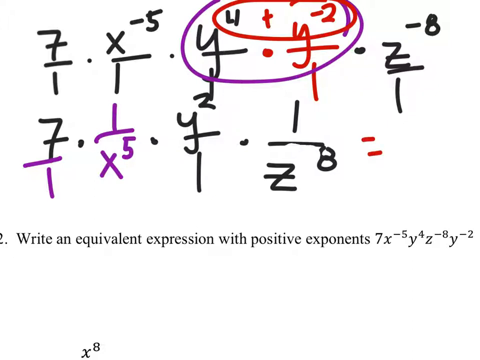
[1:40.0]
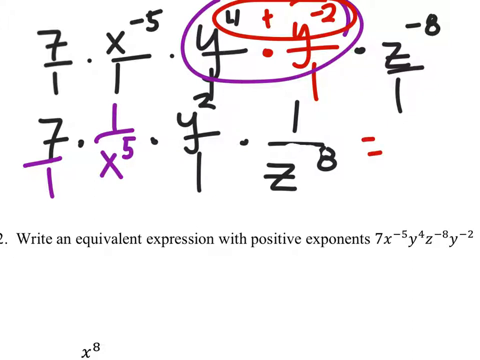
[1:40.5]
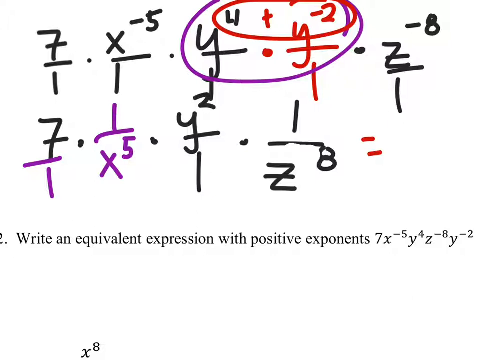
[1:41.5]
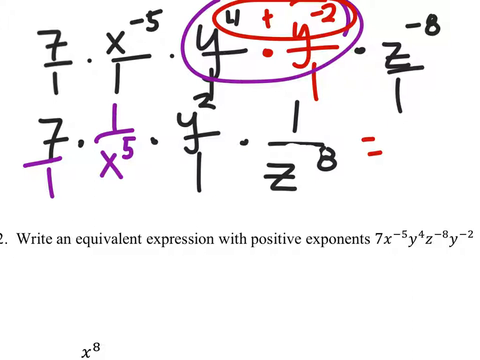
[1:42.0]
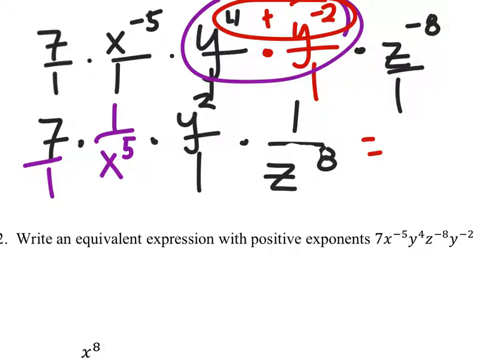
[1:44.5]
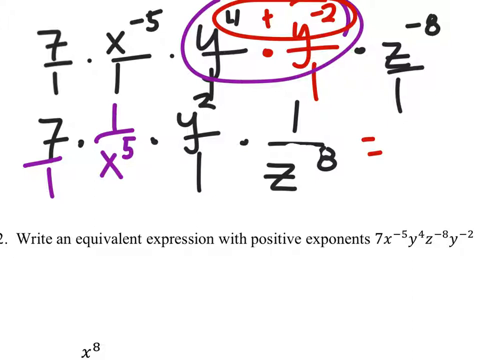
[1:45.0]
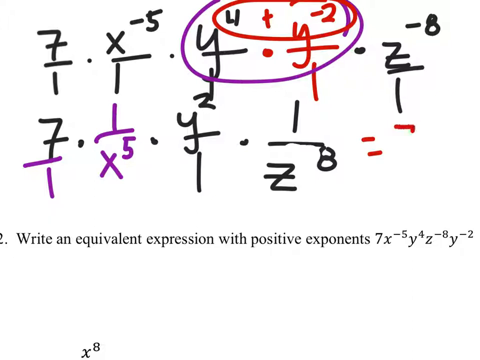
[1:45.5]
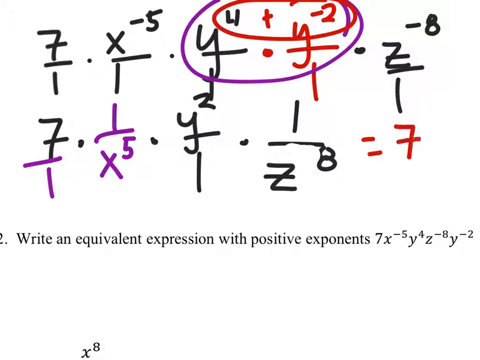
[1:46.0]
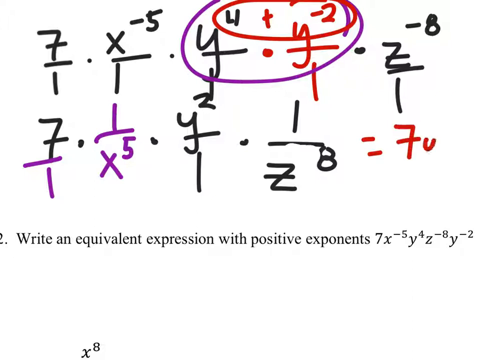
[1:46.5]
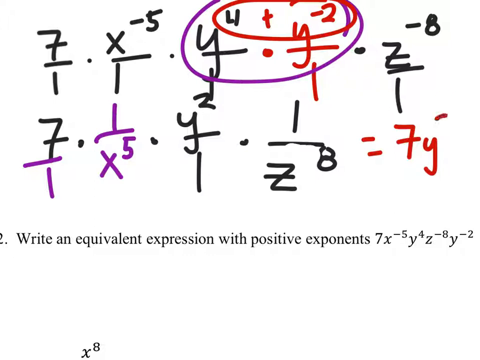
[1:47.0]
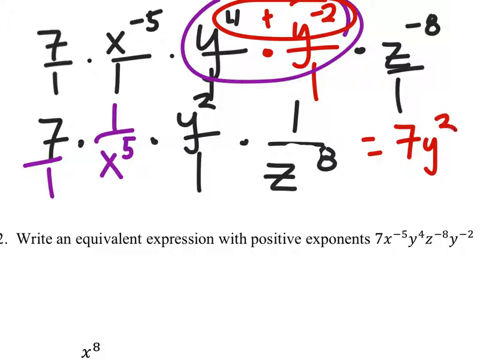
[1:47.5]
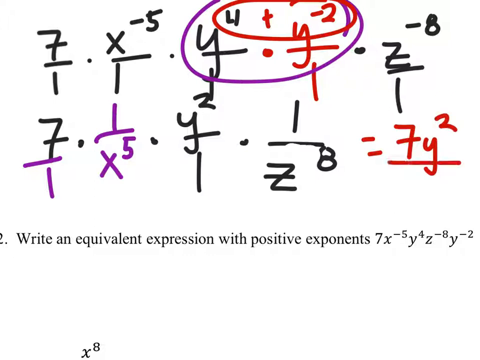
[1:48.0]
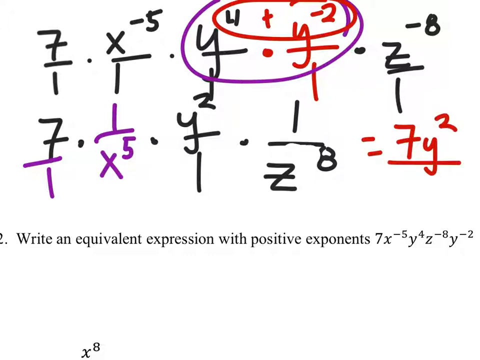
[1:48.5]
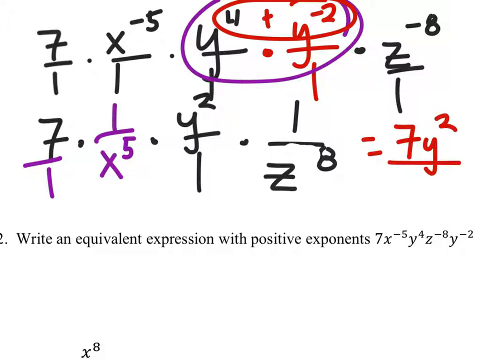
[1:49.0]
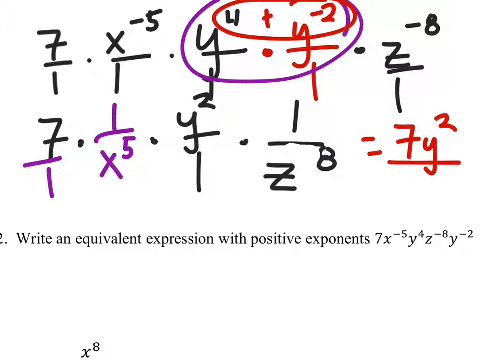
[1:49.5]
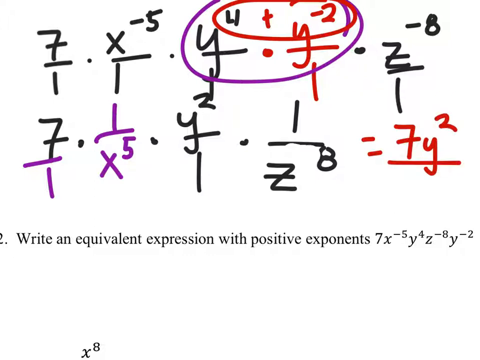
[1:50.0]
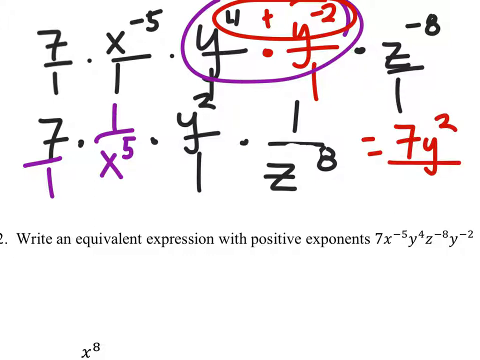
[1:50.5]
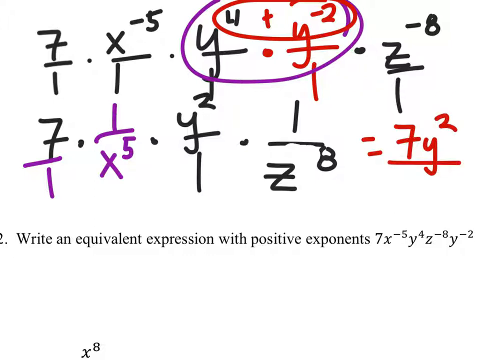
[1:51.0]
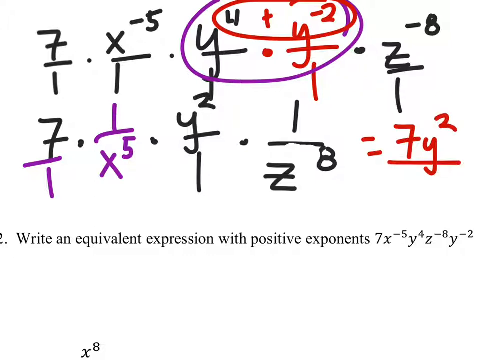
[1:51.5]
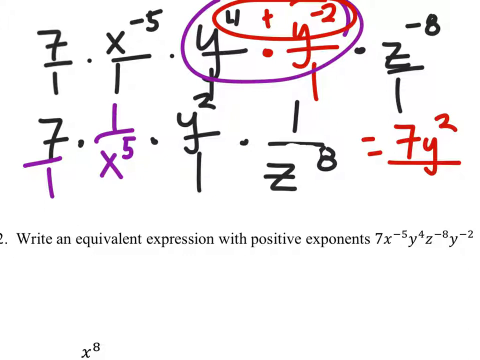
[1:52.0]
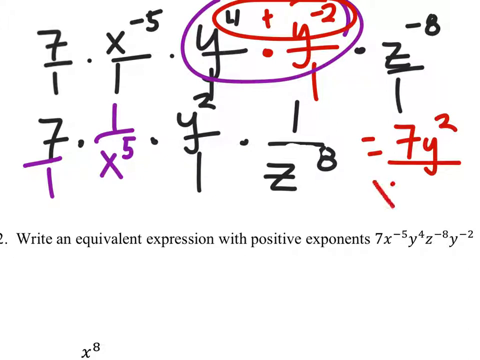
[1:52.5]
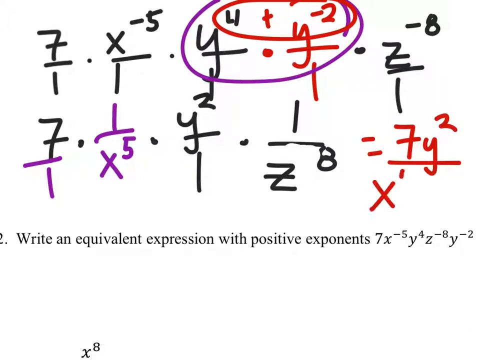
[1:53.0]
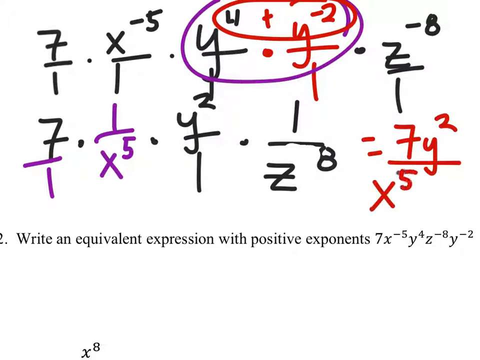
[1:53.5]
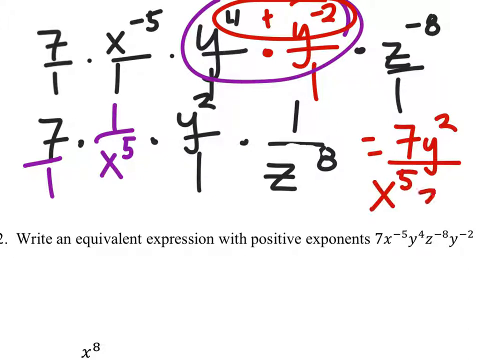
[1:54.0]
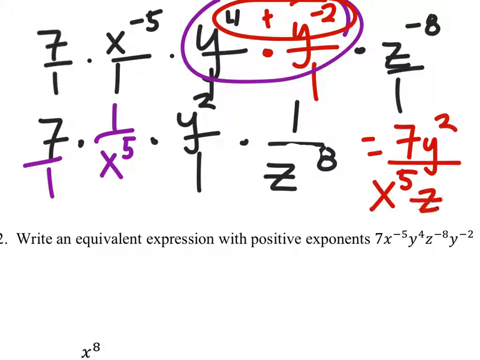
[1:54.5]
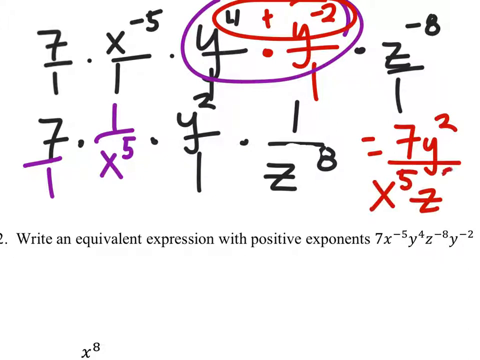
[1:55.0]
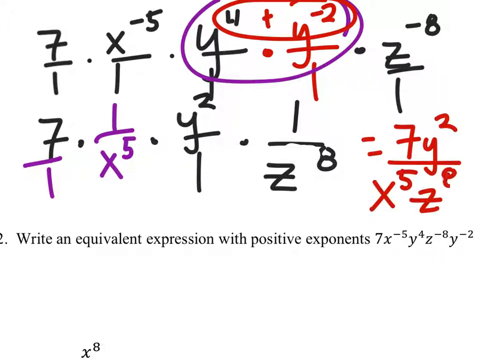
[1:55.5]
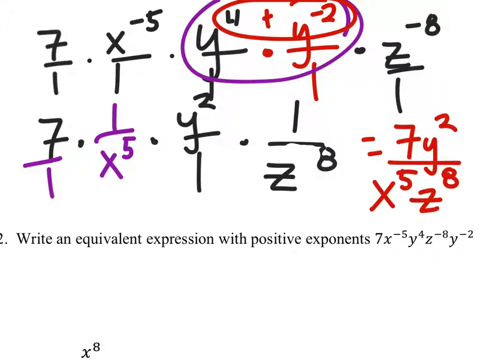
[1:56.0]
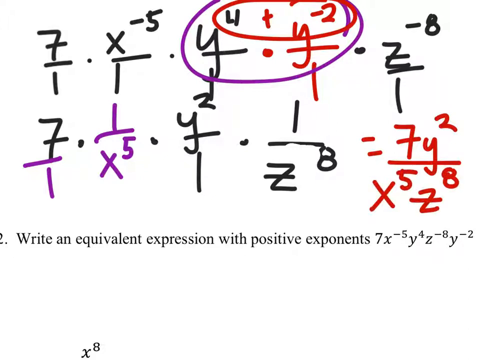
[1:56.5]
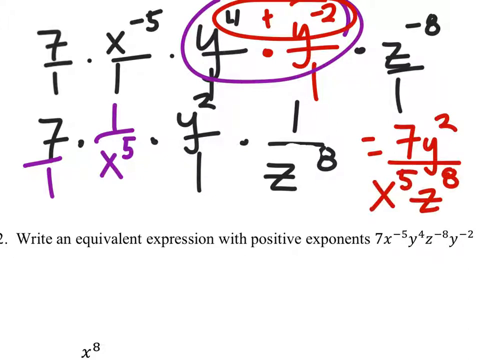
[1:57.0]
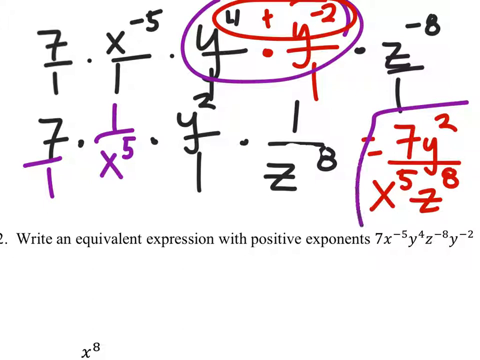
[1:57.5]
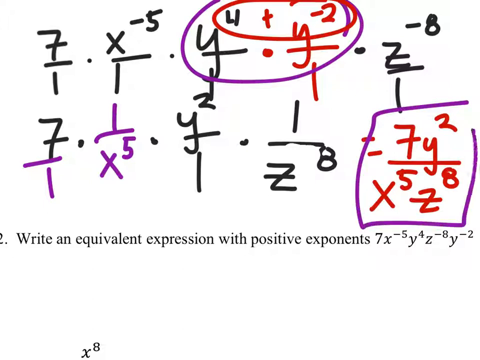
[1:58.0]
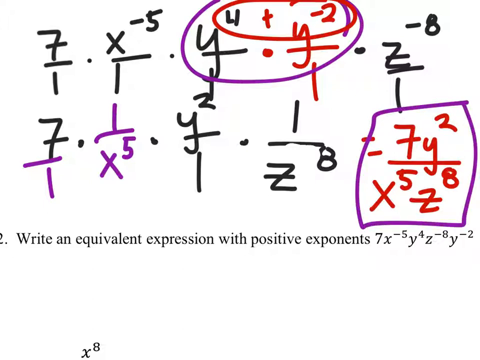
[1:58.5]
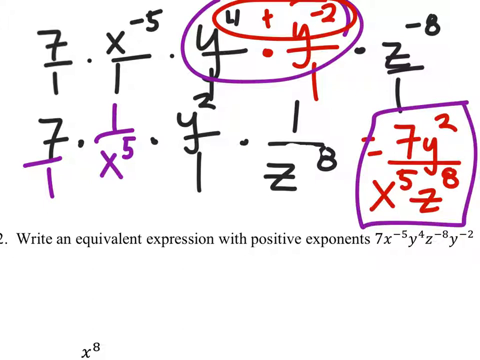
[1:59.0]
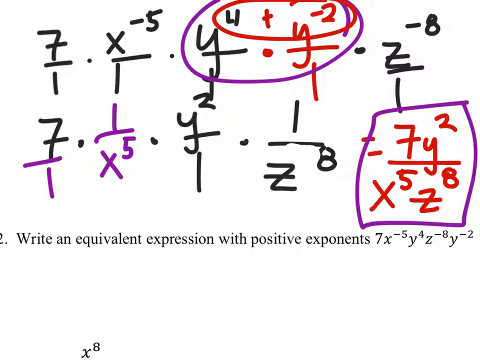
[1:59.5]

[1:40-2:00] The white screen with the gradient to black in roughly the bottom 20% remains. Handwritten across the top is 7 over 1 times x to the negative 5th over 1 times y to the 4th over 1, in red times y to the negative 2 over 1, and back in black, z to the negative 8 over 1. A purple circle surrounds the y's and their exponents, and a red circle surrounds just the exponents, cutting into the red y to take in its top half, with a red plus sign indicating the exponents are added. Beneath that, the rewritten equation reads: a black 7, a purple "over 1," in purple times 1 over x to the 5th, then in black, times y to the 2nd over 1, times 1 over z to the 8th. The minus sign that was on the 8 has been rubbed out, cutting slightly into the division bar. A red equals sign follows. Beneath that is the 2, partially off-frame, and the typed text "write an equivalent expression with positive exponents" with 7x to the negative 5th, y to the 4th, z to the negative 8, and y to the negative 2. The screen holds briefly, then 7y to the 2nd over x to the fifth z to the eighth is written in red next to the equals sign. A purple box is drawn around it, starting in the upper right and moving around, marking it as the equivalent expression that answers the question.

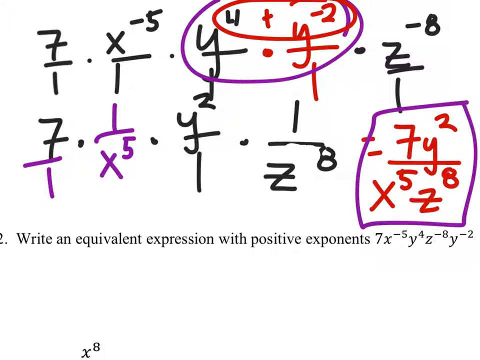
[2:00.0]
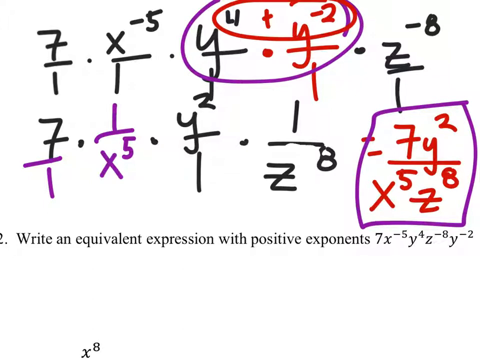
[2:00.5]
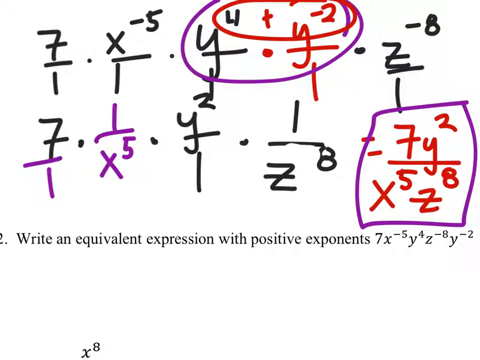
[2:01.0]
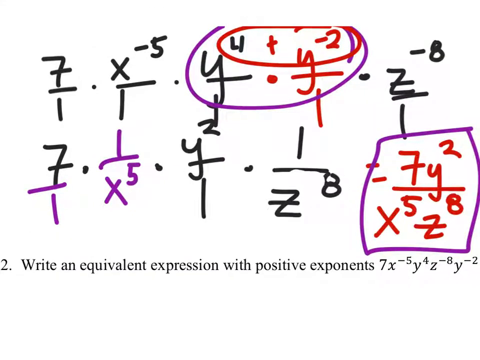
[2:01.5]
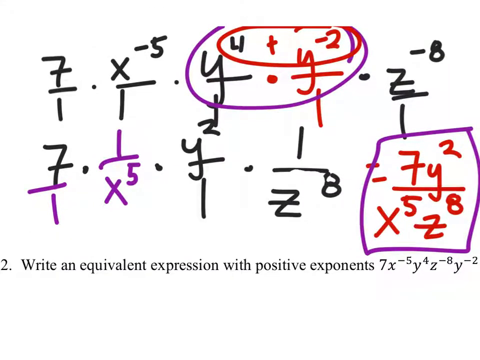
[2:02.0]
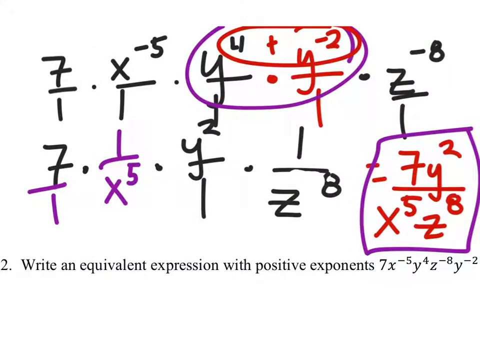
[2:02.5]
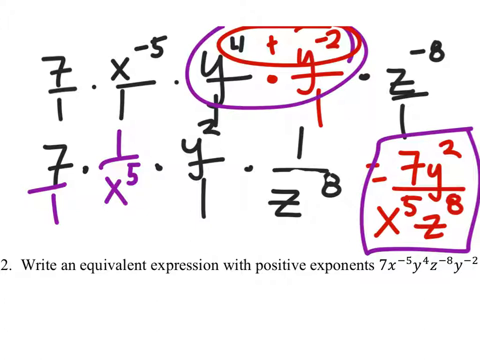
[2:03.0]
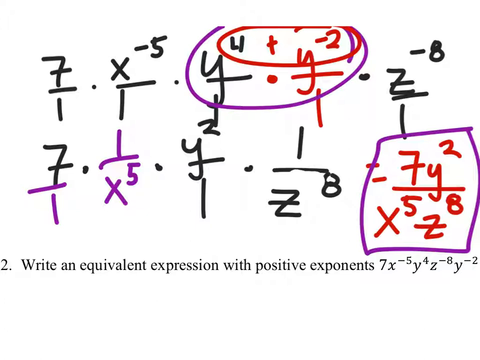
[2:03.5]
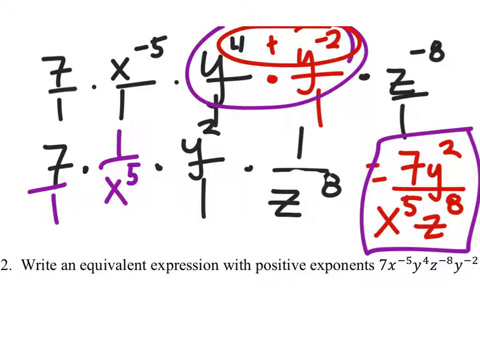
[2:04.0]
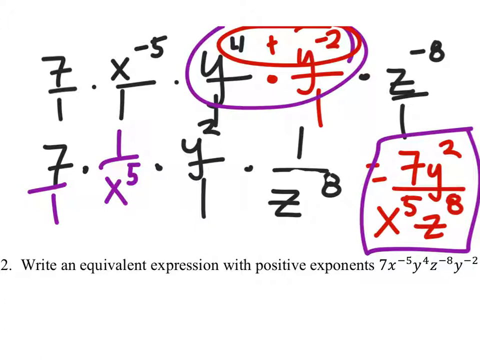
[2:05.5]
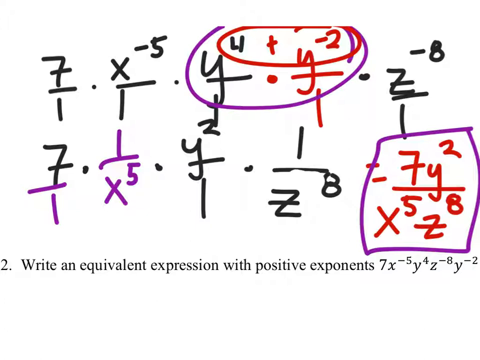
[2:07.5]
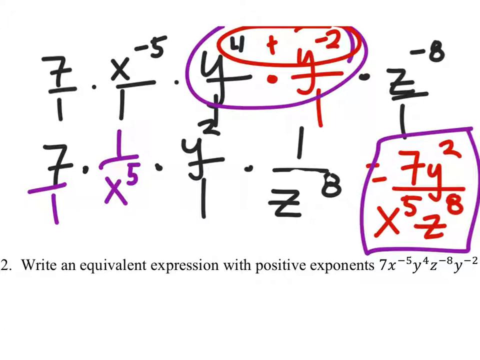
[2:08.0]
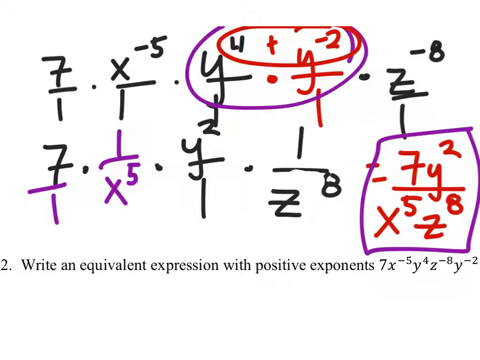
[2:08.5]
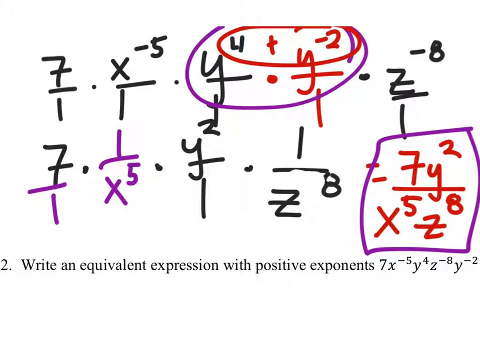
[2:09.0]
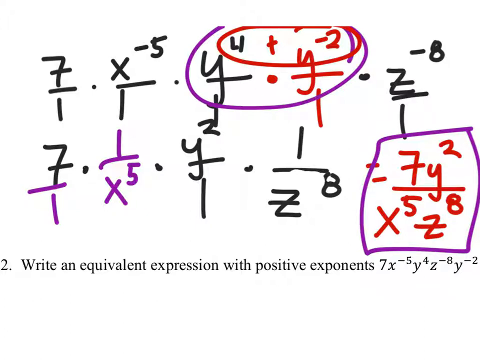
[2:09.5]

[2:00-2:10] The white background with the gradient toward the bottom 20% remains. Handwritten in black is 7 over 1 times x to the negative 5th over 1 times y to the 4th over 1, then in red, times y to the negative 2nd over 1, then in black, times z to the negative 8th over 1. The y's and their exponents are circled with a purple marker, and the exponents and the top half of the red y are circled in red, with a red plus mark indicating the exponents are added. Beneath that is the rewritten equation: a black 7, then in purple, over 1 times 1 over x to the 5th, then in black, times y to the 2nd over 1, times 1 over z to the 8th. The minus sign that the 8 used to have has been erased. A red equals sign is followed by 7y to the 2nd over x to the 5th z to the 8th, boxed in purple to show it is the answer. Typed beneath is the 2 with "write an equivalent expression with positive exponents" and 7x to the negative 5th, y to the 4th, z to the negative 8th, y to the negative 2nd.